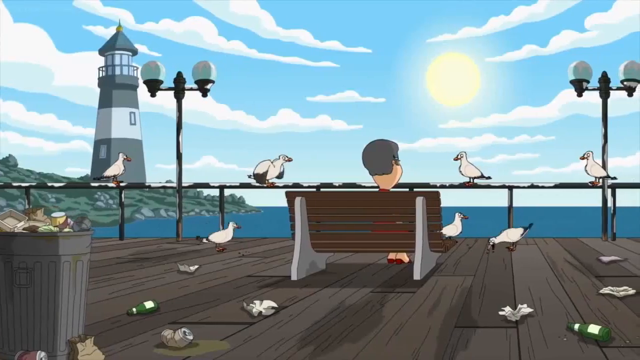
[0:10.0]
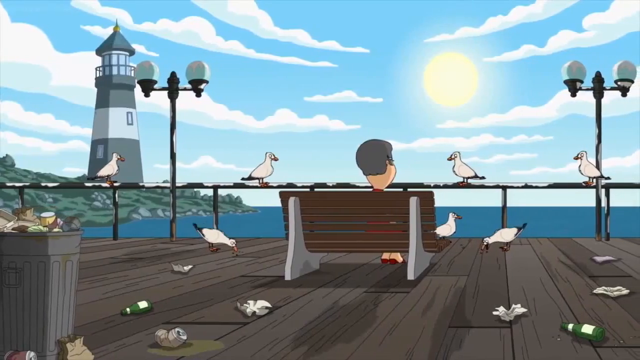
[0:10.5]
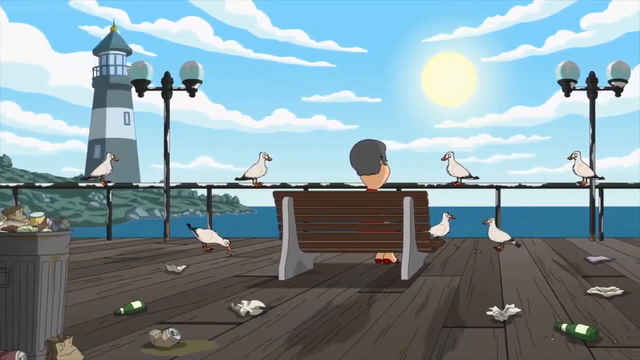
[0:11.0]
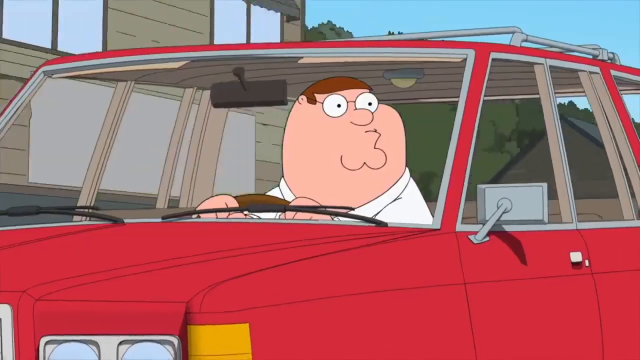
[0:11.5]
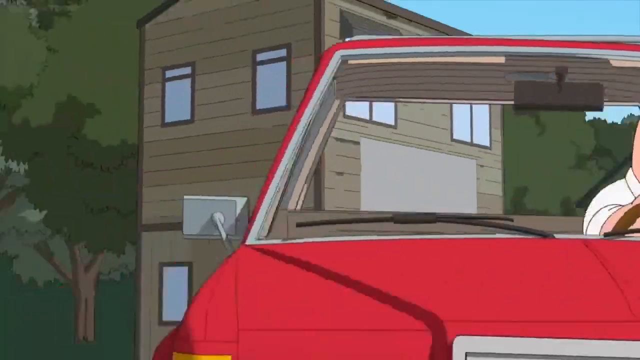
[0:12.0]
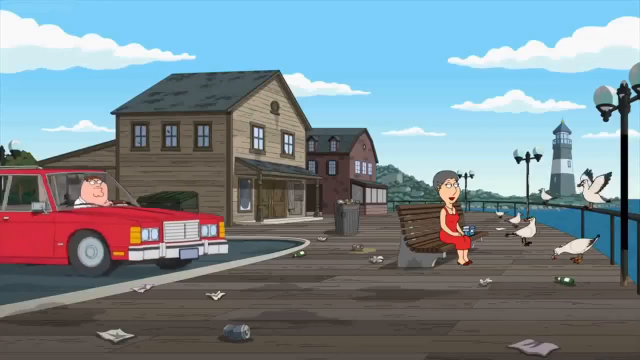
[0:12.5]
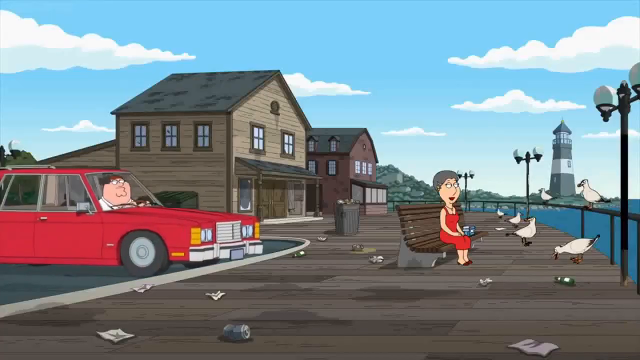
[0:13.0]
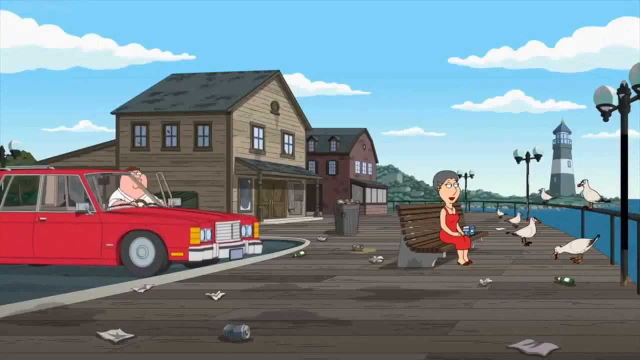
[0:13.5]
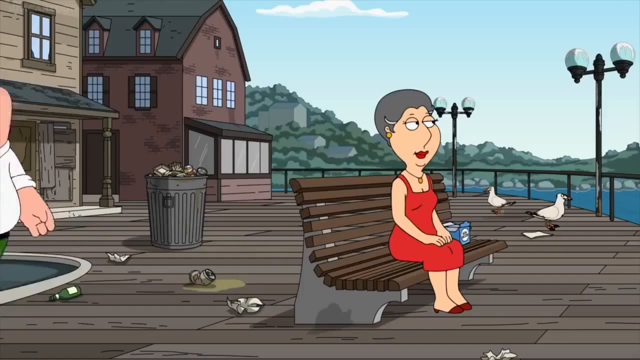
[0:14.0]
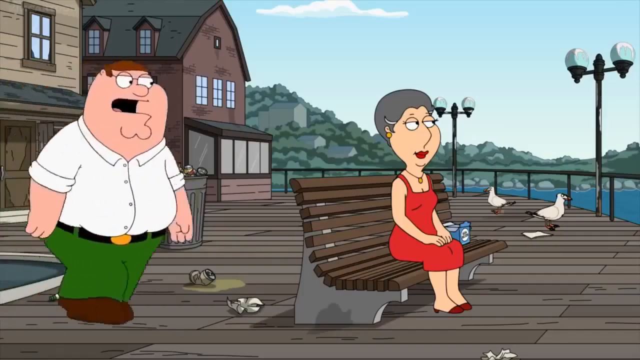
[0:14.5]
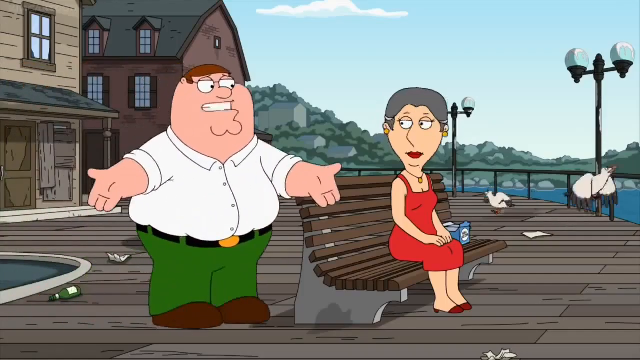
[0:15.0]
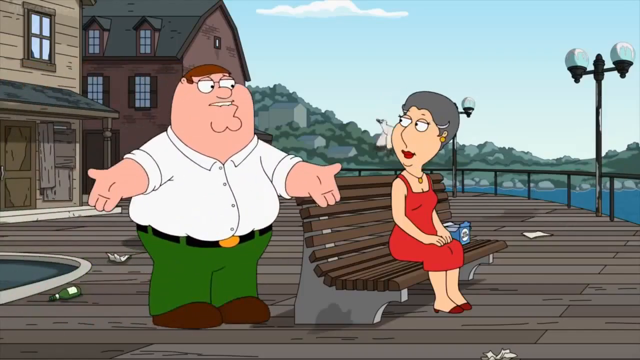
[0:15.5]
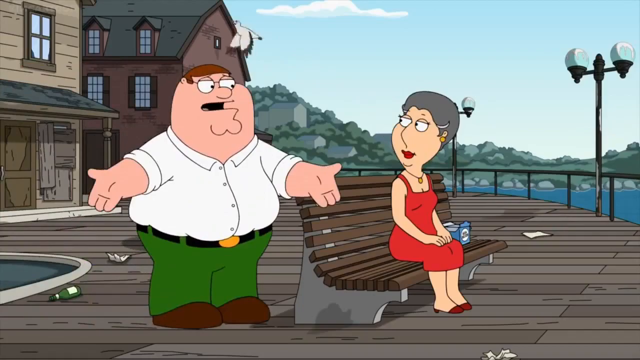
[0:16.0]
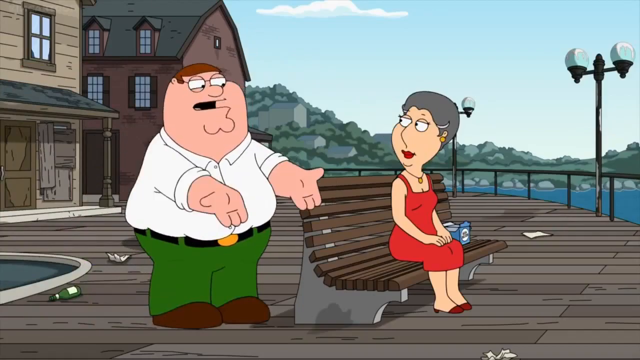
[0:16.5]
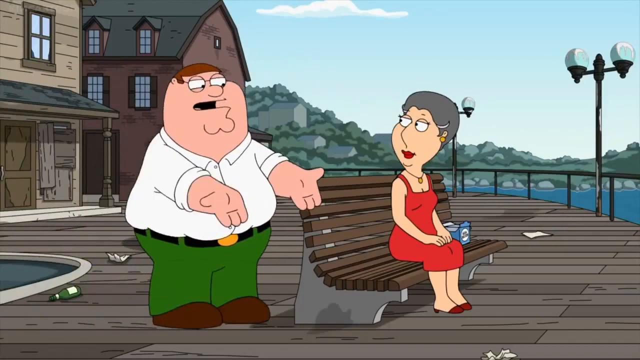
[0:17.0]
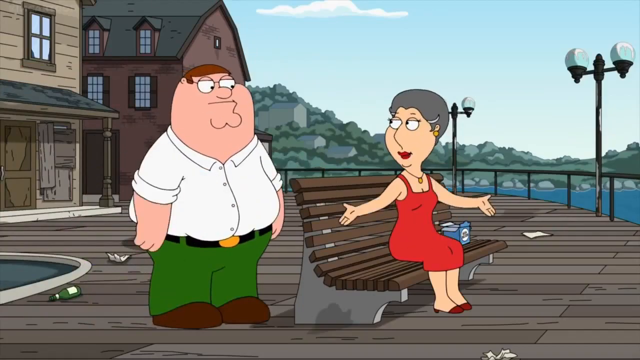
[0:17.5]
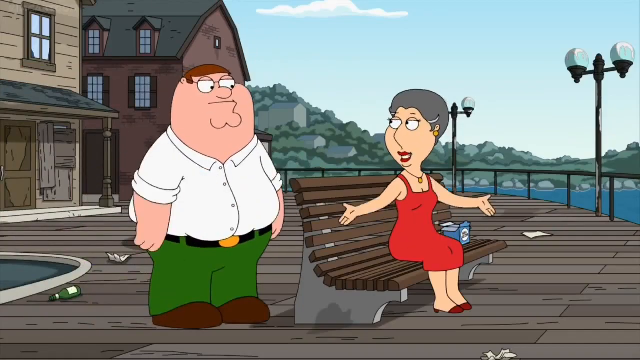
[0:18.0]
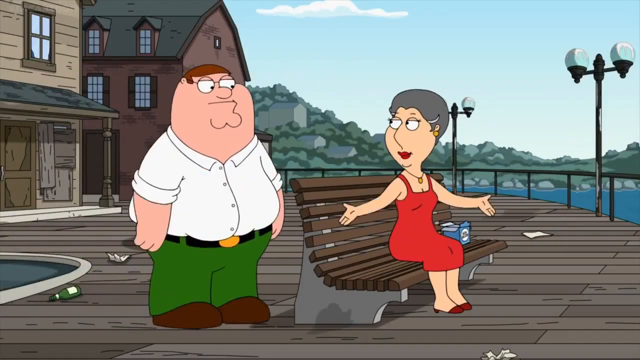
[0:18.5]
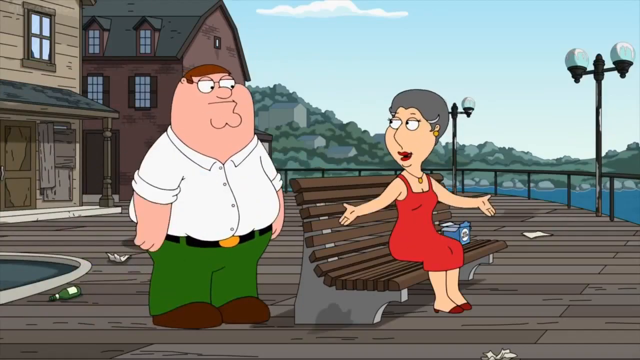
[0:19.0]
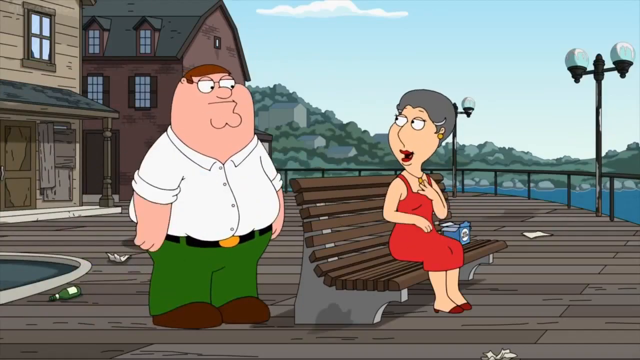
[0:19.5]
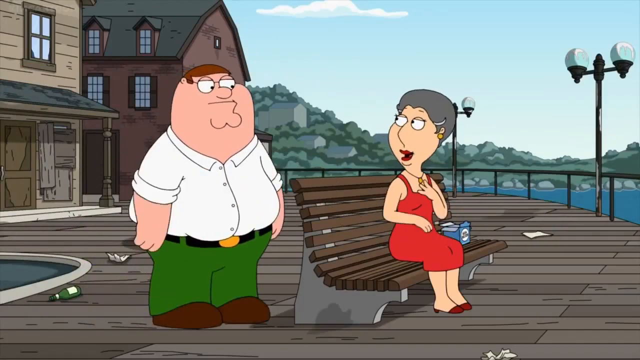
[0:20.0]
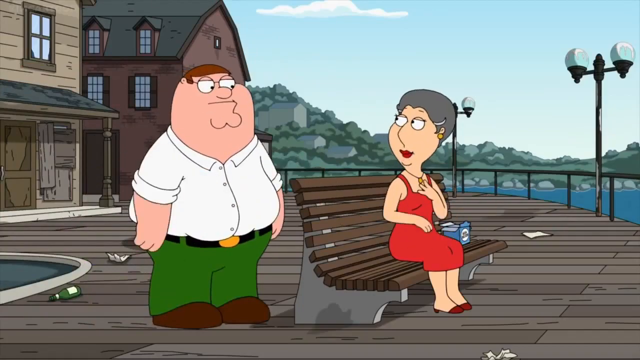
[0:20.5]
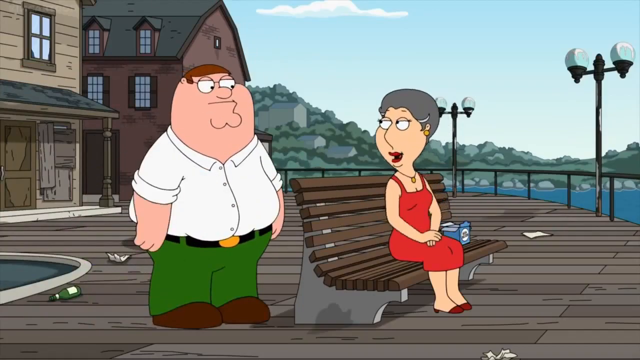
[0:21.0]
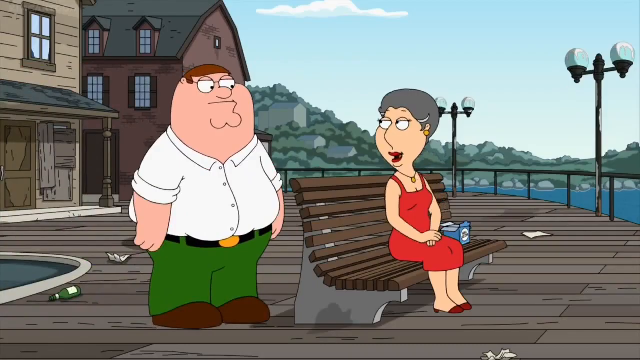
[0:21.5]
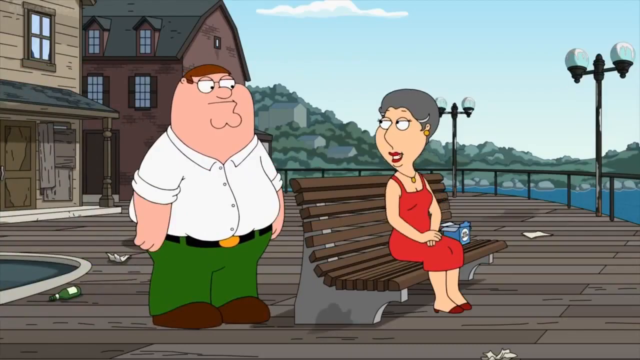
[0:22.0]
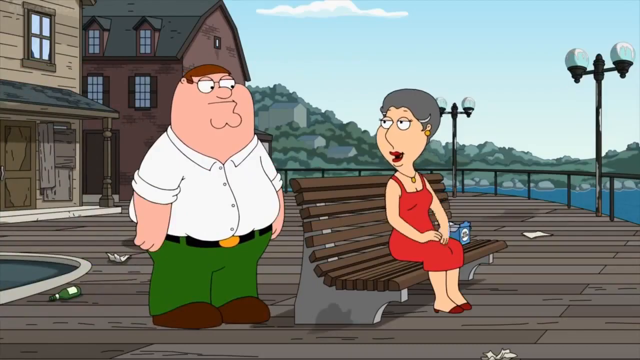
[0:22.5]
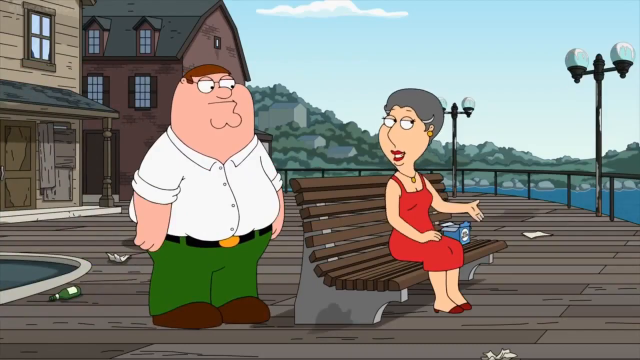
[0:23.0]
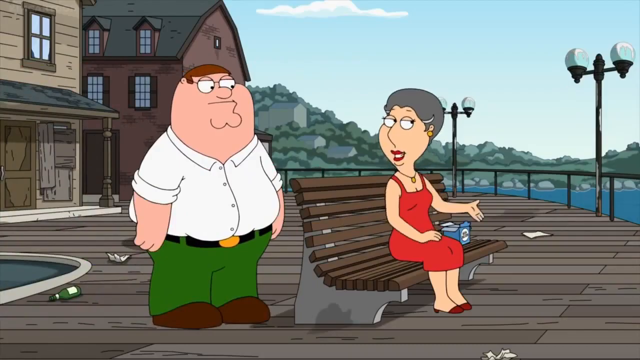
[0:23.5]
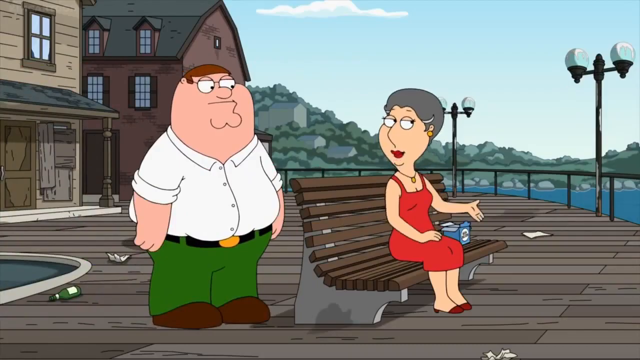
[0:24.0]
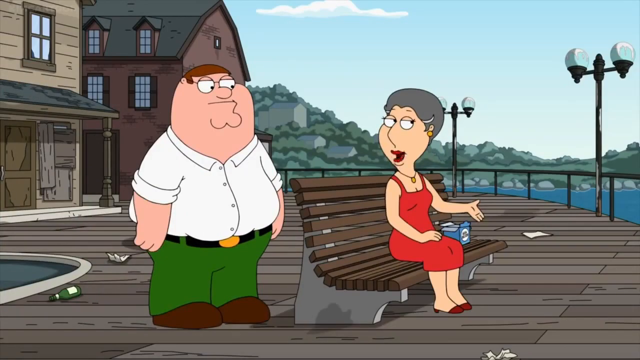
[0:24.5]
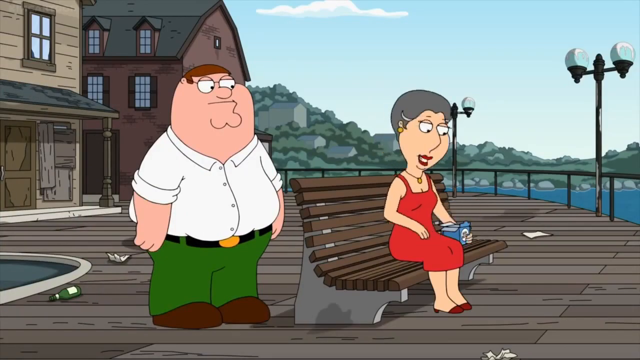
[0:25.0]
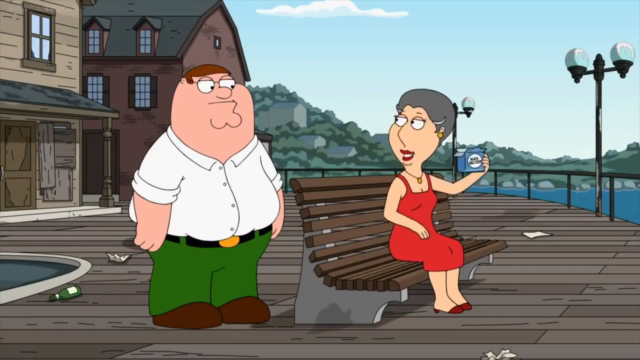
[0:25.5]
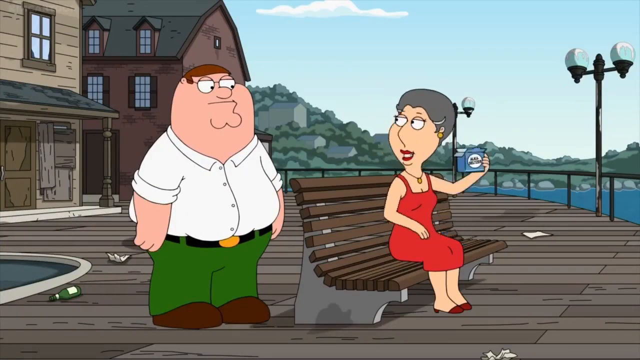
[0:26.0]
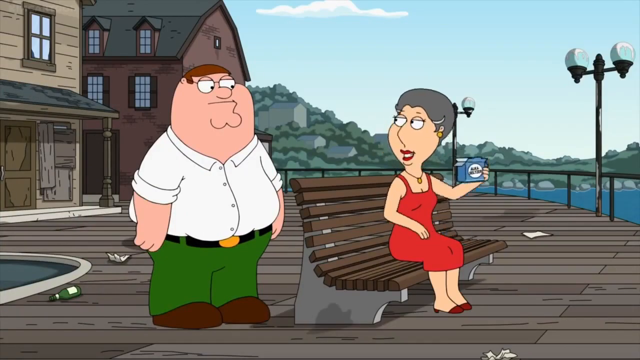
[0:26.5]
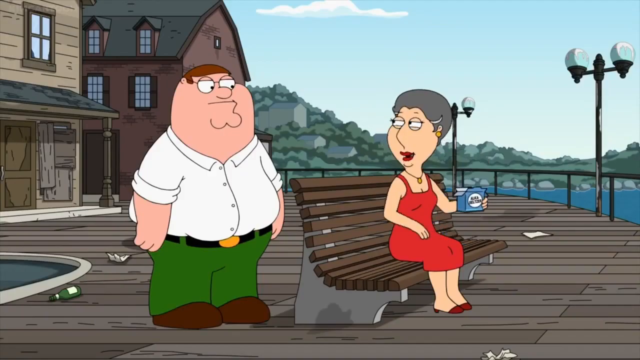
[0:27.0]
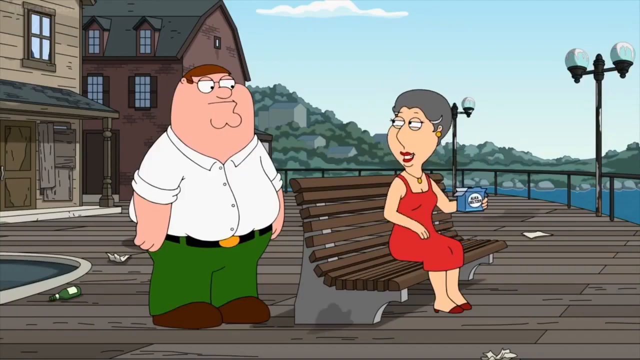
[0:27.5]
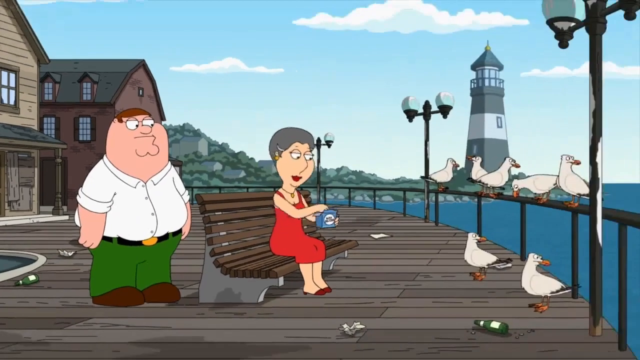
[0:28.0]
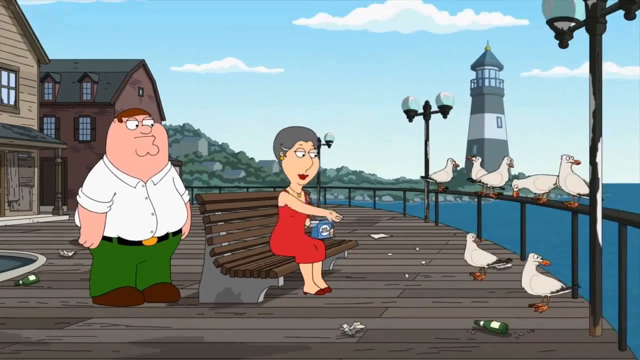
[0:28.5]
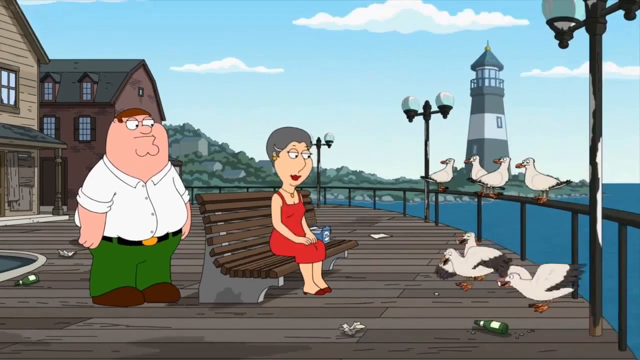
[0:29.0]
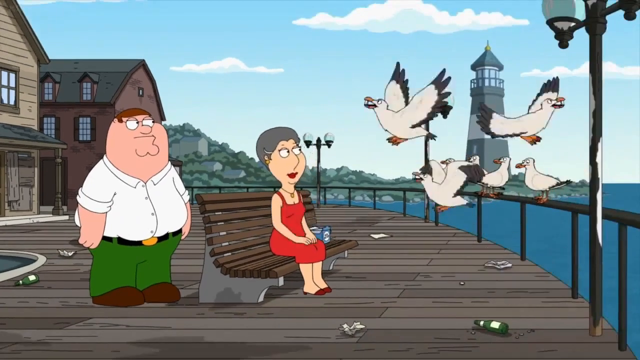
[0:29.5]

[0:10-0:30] A man is on a park bench with the ducks. Suddenly another man pulls his car up to the boardwalk behind a woman, possibly his wife. Both are older, appearing to be in their 50s or 60s; he is a little older and heavy, overweight. She feeds the ducks and is possibly watching the sunset, with clouds and the sun shown. Behind her is a garbage can that is pretty full, a lighthouse is in view, and the water is very blue. The man seems to be looking for her; he gets out and almost starts to yell at her. She puts her hands out as if to say "what?" They talk for a moment, then she shows him the food she was using to feed the ducks and feeds the birds. The birds eat and then fly away.